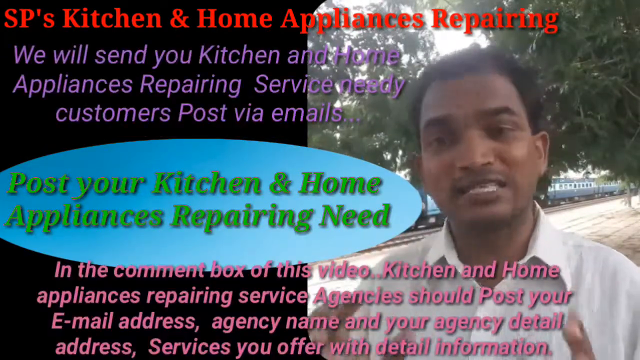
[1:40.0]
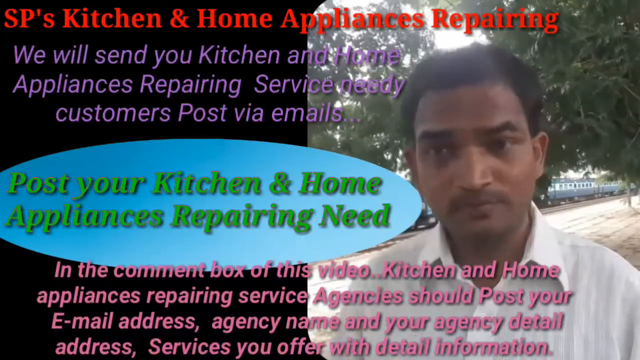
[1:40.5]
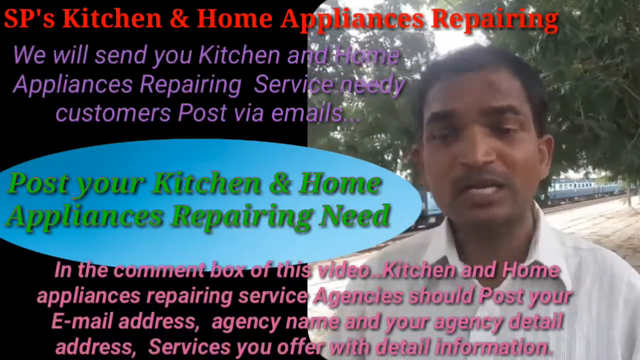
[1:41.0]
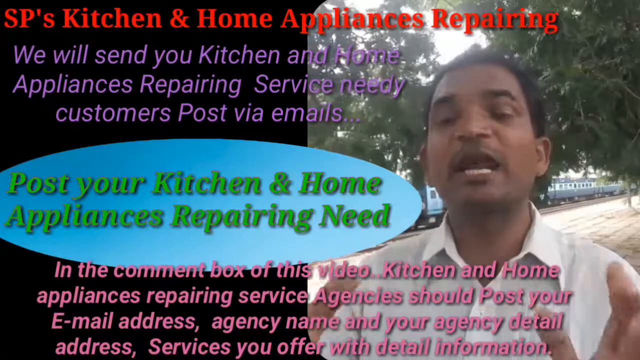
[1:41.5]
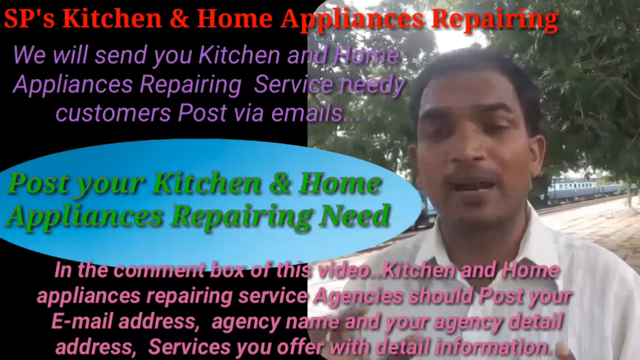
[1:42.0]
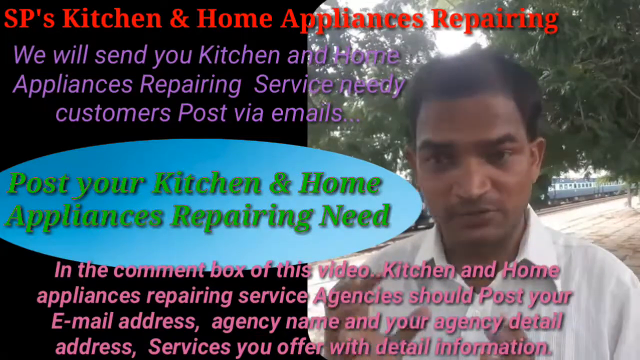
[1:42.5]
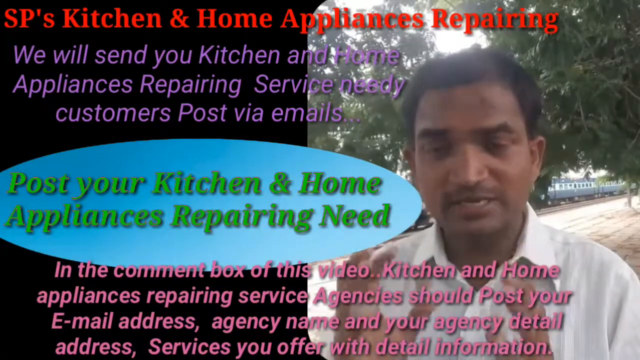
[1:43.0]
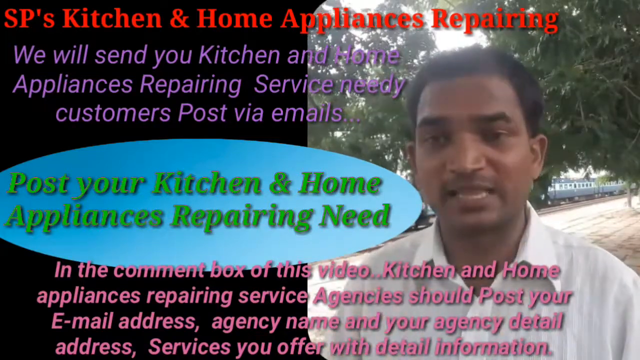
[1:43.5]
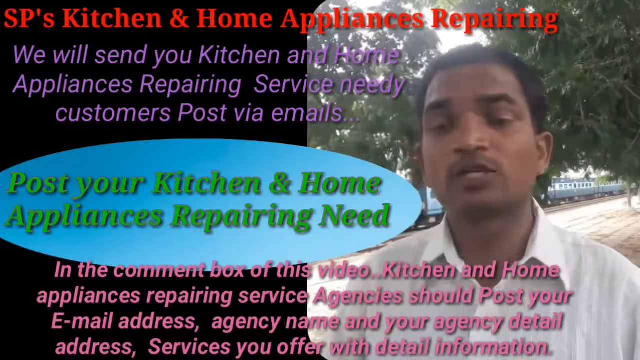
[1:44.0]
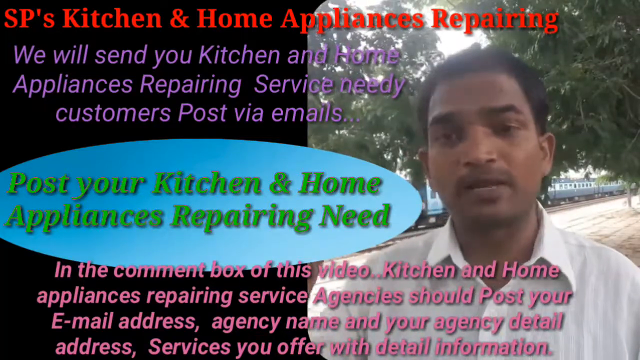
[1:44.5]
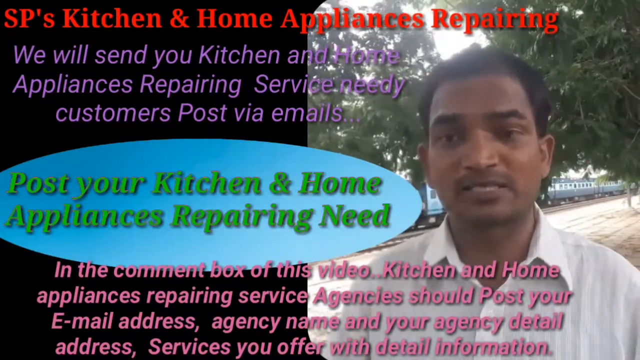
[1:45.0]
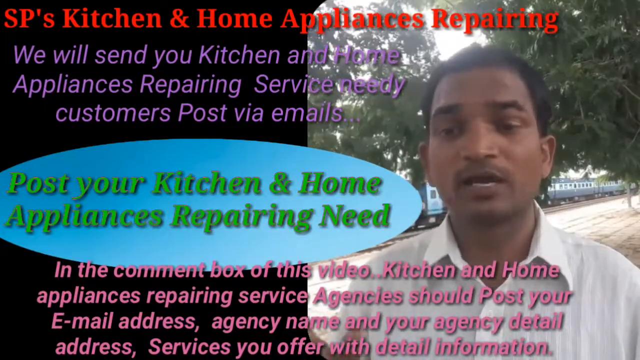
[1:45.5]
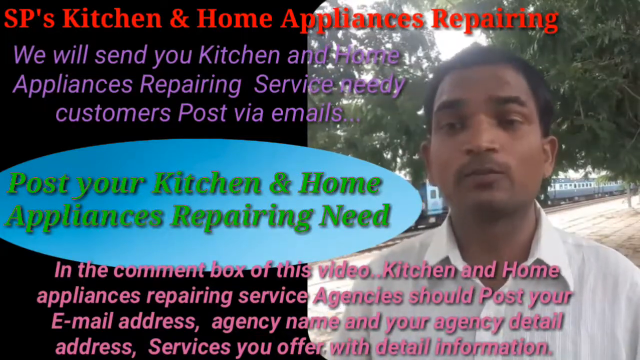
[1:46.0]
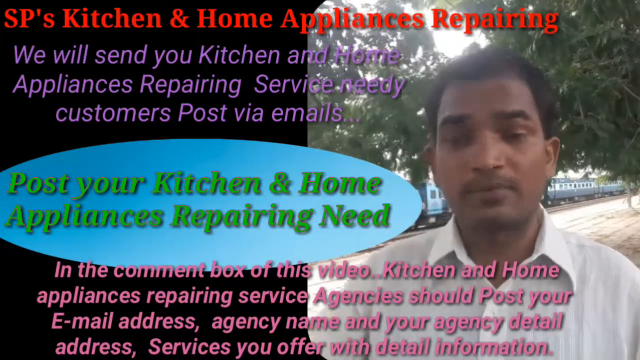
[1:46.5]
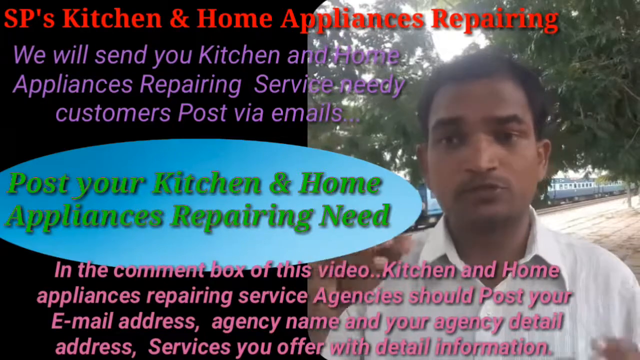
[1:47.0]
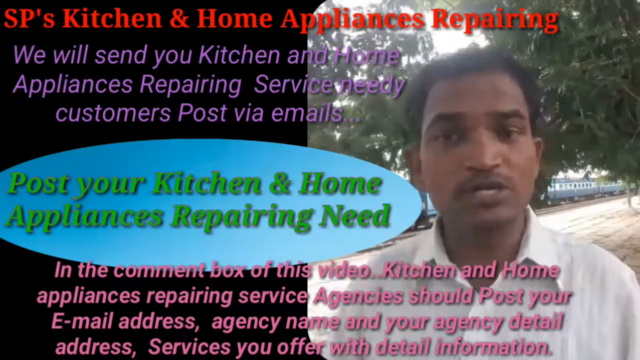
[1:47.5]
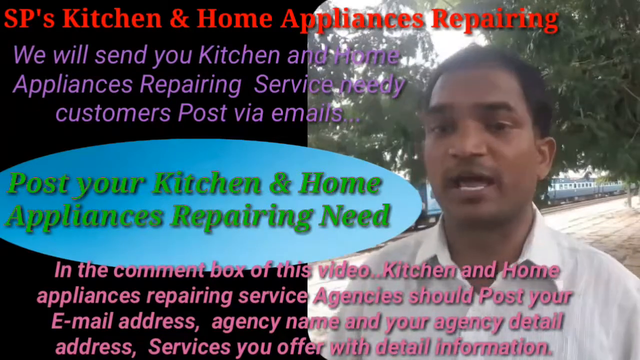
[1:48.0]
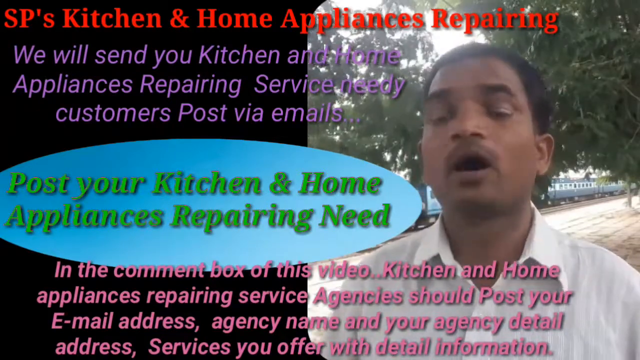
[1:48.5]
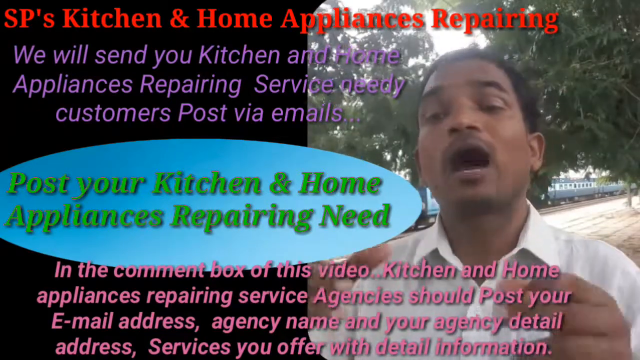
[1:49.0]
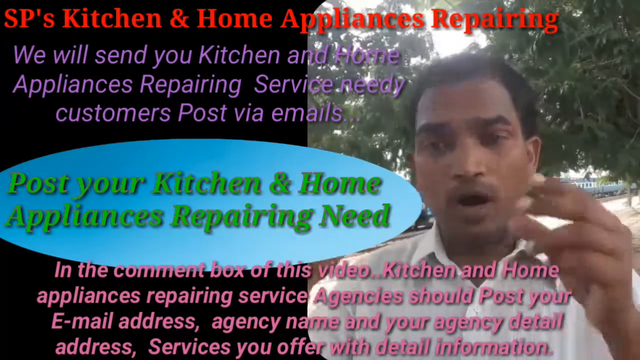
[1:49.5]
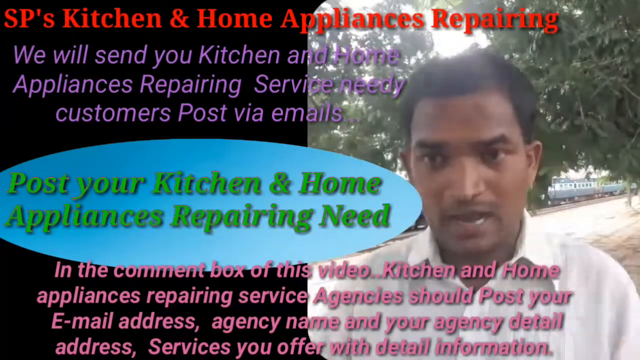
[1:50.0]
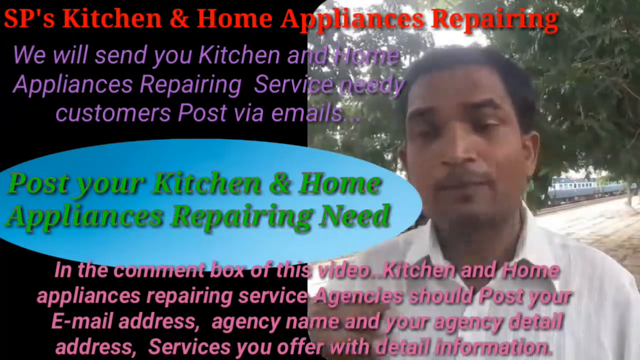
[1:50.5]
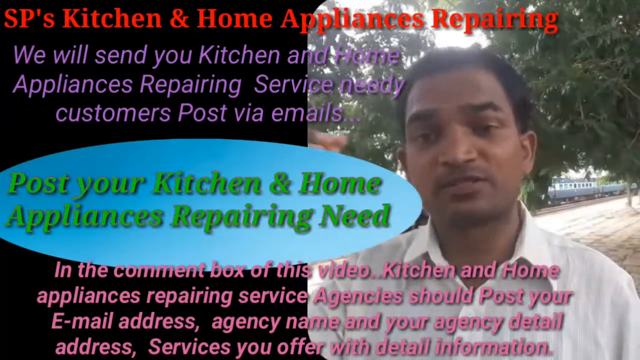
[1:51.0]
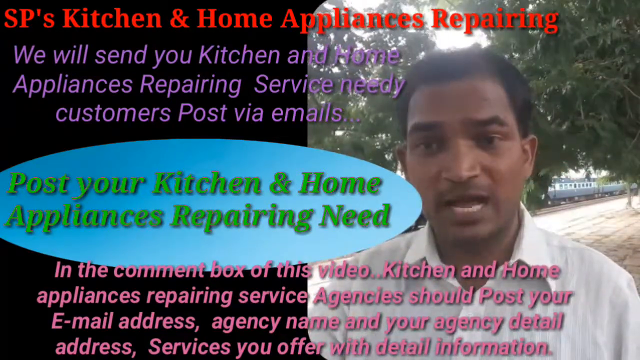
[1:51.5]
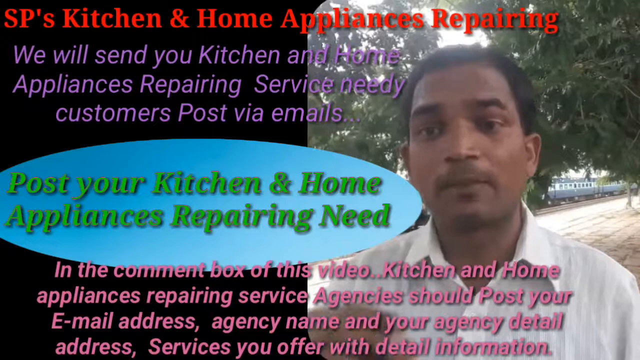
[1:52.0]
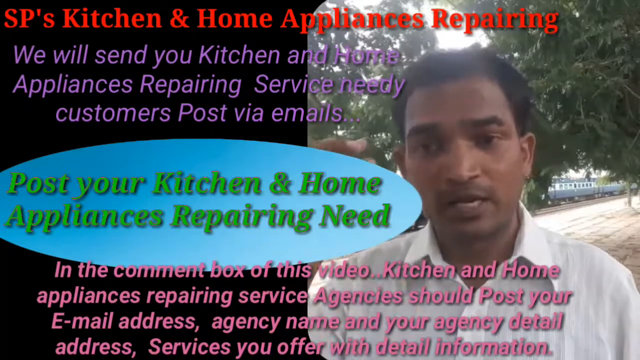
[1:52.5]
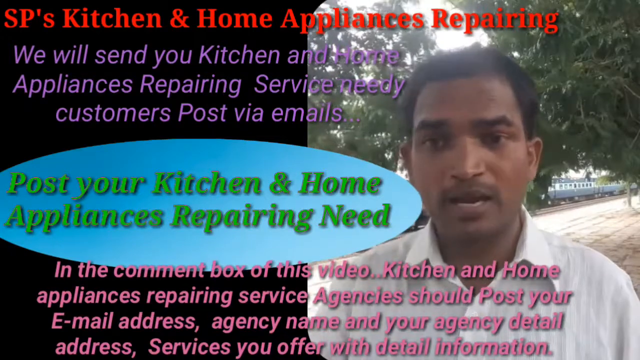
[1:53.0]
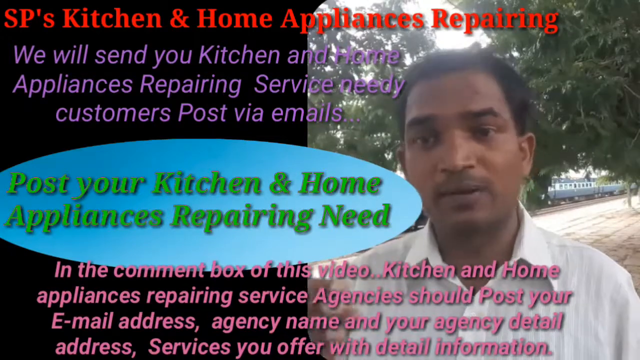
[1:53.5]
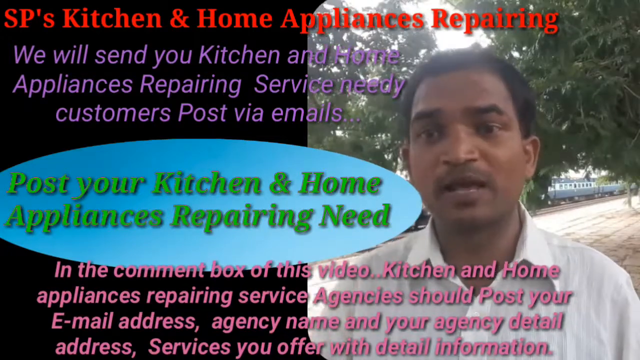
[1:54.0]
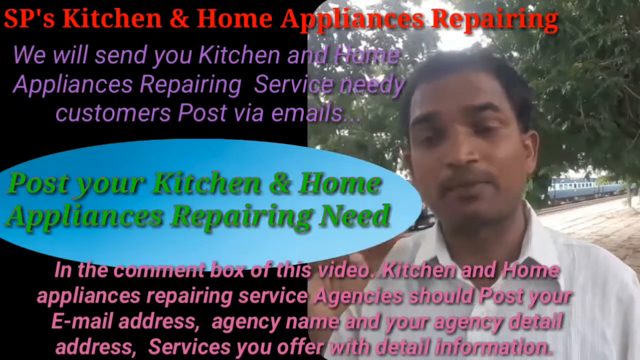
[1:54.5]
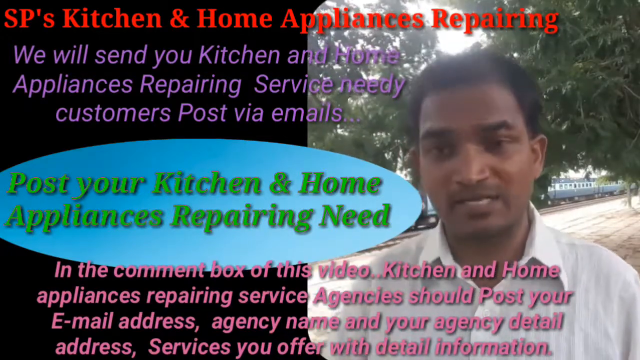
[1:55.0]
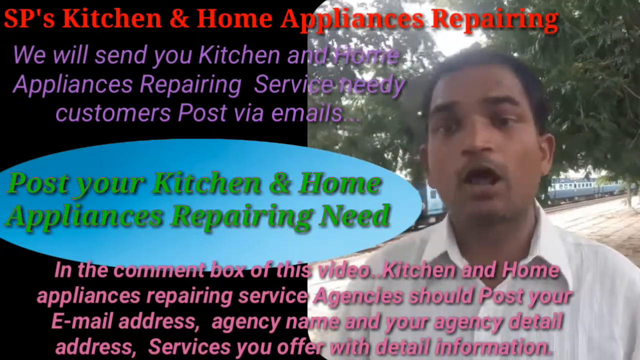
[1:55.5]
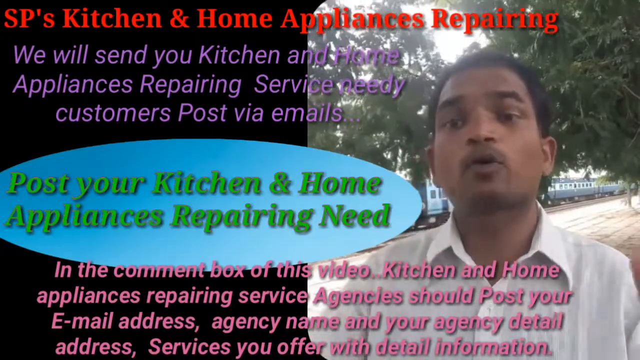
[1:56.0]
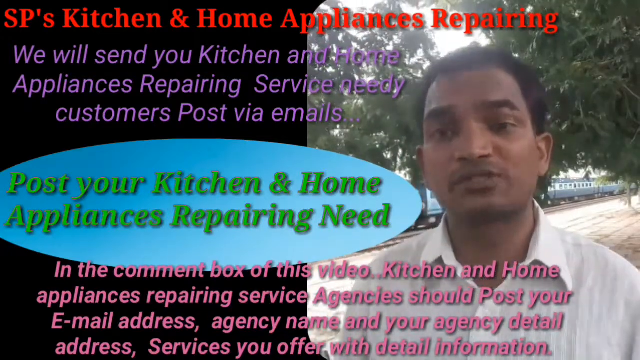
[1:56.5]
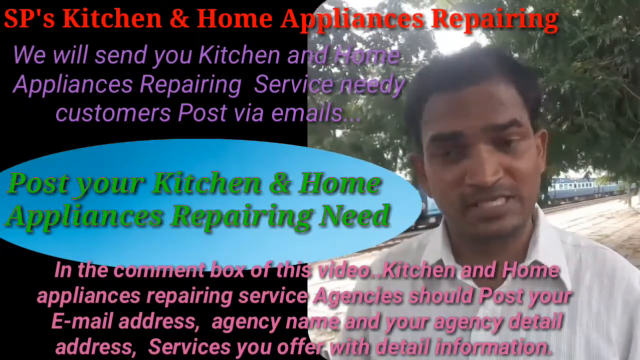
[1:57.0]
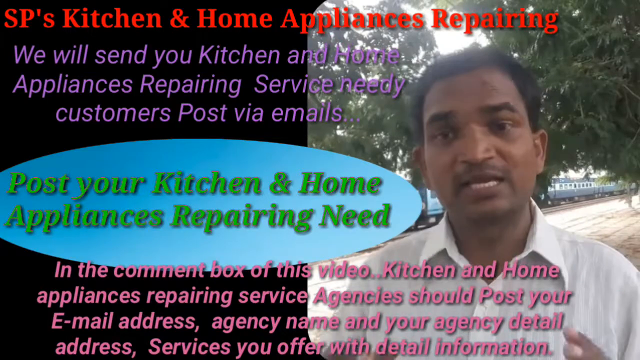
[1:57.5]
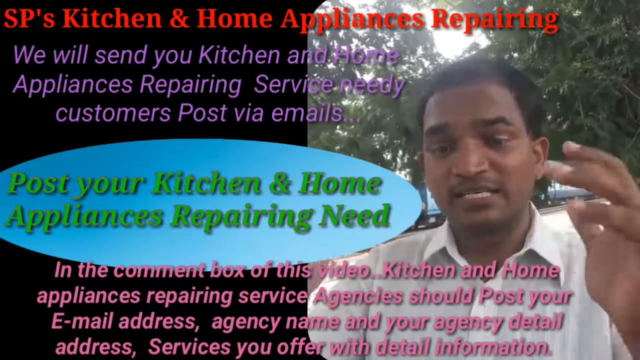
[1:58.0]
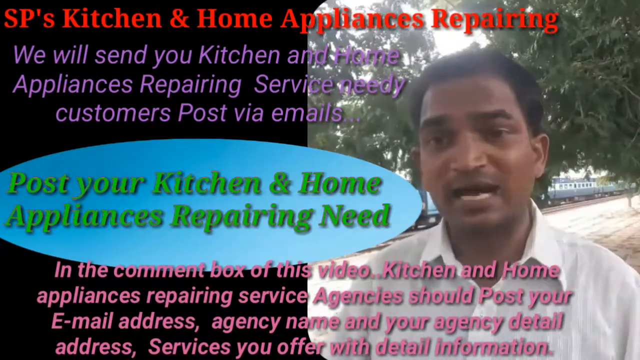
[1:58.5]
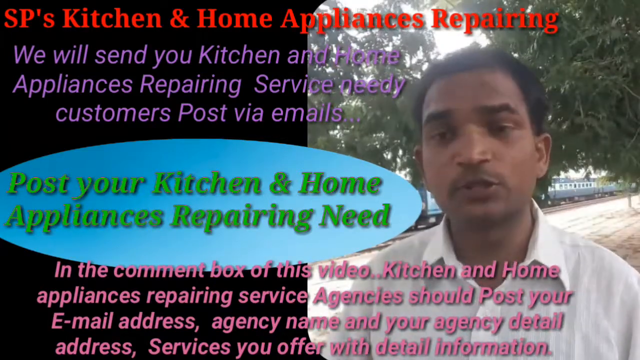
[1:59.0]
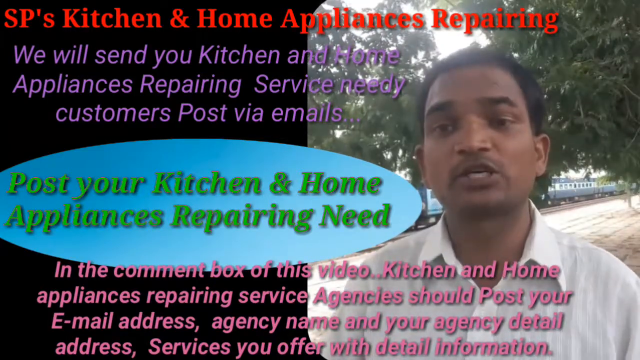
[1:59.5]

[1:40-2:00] A man talks to the camera outside, with foliage and trees behind him. On screen, red text reads "SP's kitchen and home appliances repairing." Purple text reads "we will send your kitchen and home appliances repairing services, needy customers post via e-mails." A blue text bubble contains green text reading "post your kitchen and home appliances repairing need." Below, pink text reads "in the comment box of this video, kitchen home appliances repairing service agencies should post your address, agency name, and your agency details." The bottom part is hard to read. The view stays on this slide with the man talking.